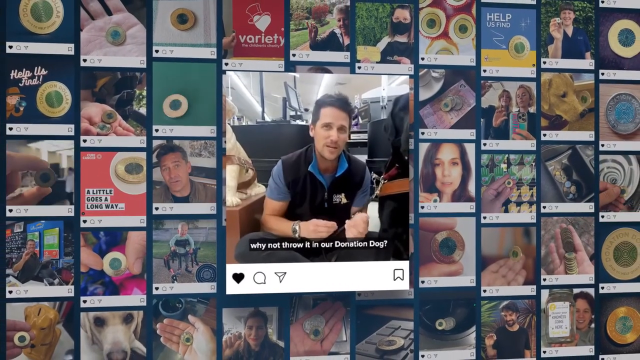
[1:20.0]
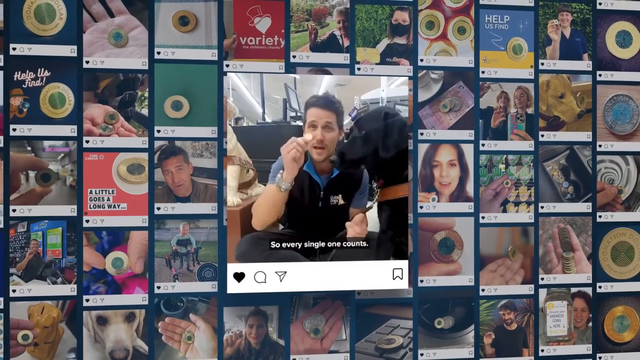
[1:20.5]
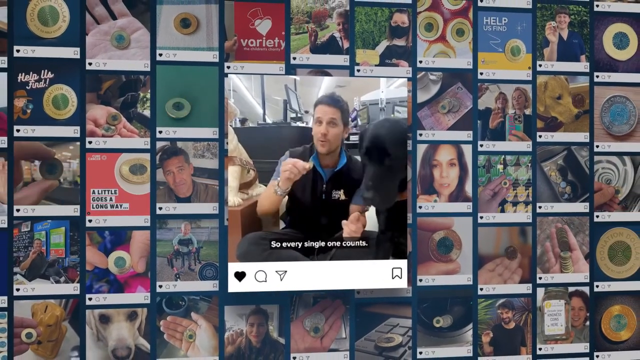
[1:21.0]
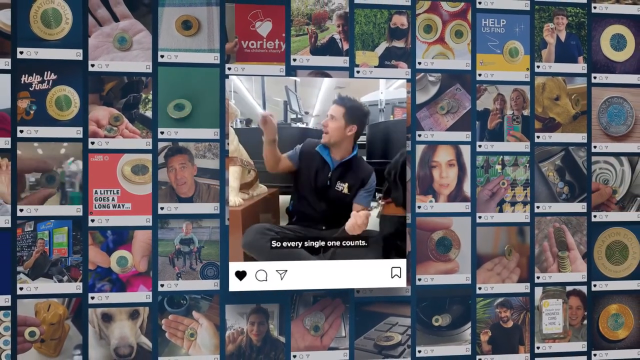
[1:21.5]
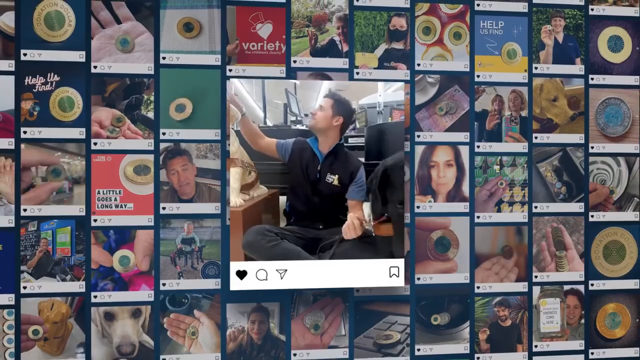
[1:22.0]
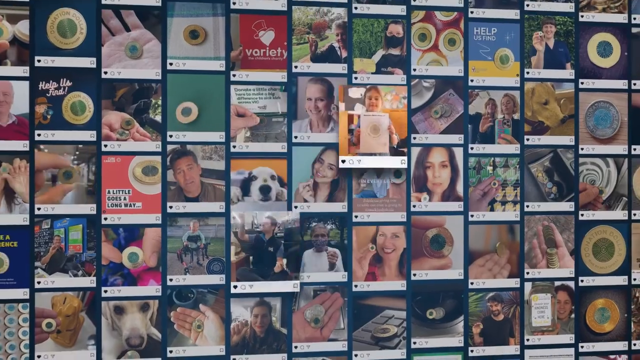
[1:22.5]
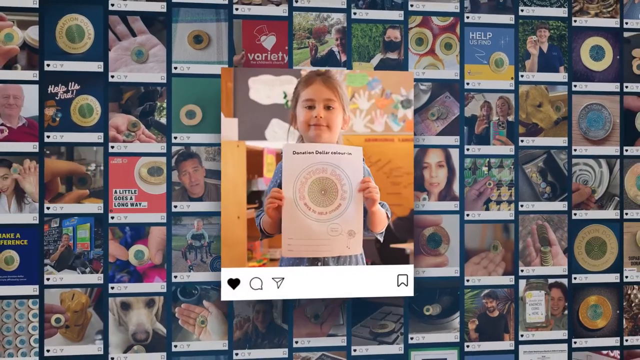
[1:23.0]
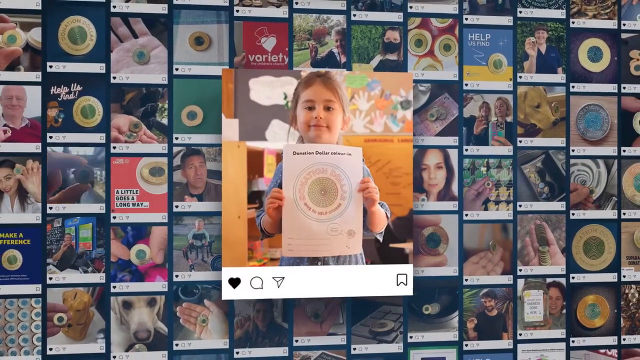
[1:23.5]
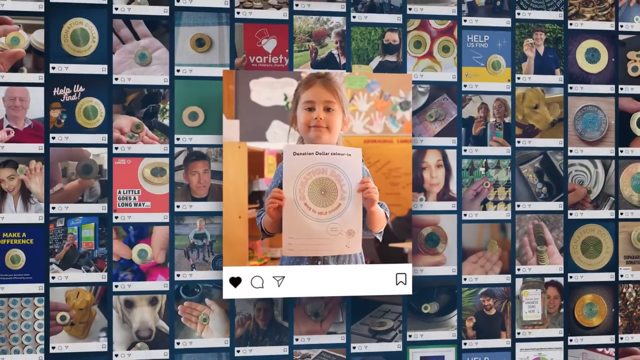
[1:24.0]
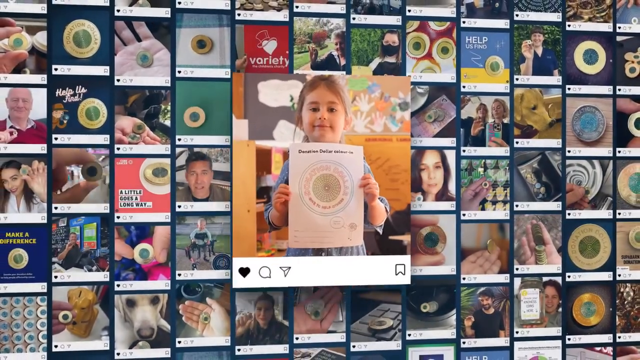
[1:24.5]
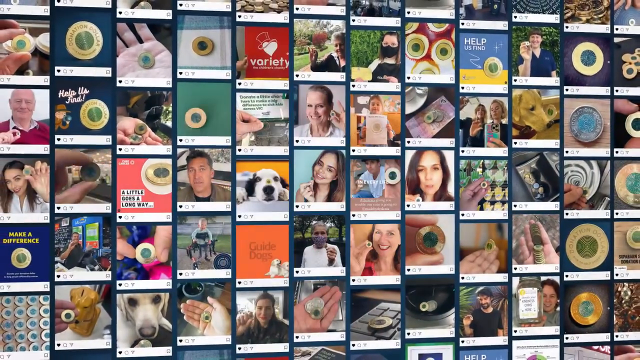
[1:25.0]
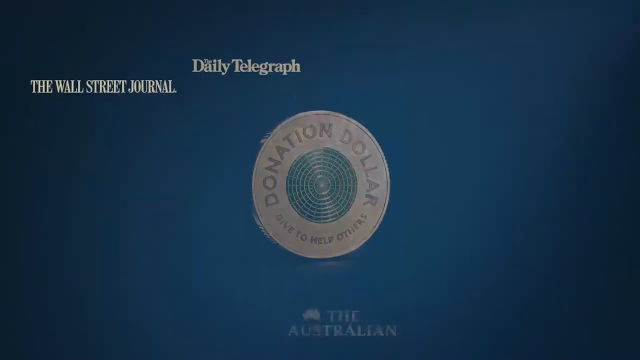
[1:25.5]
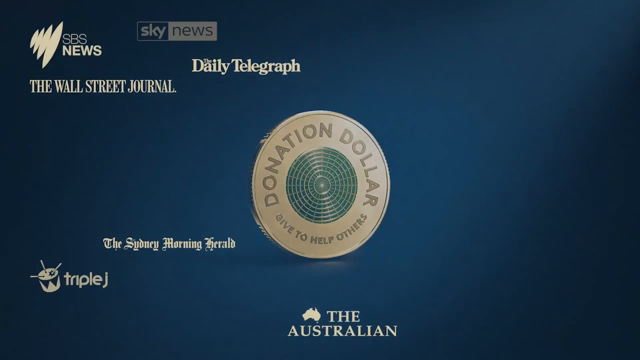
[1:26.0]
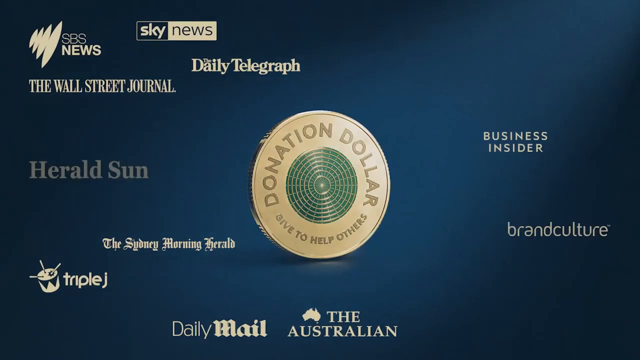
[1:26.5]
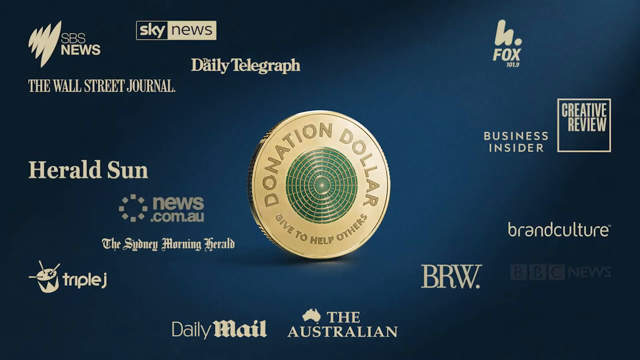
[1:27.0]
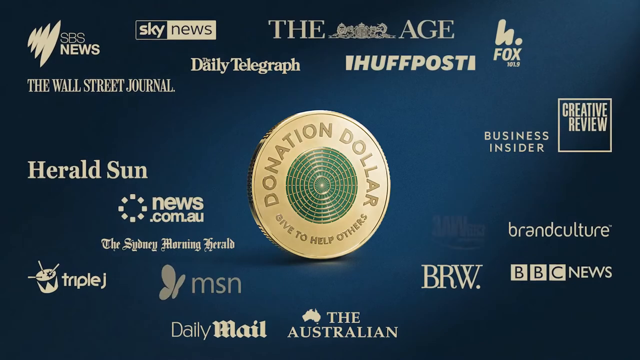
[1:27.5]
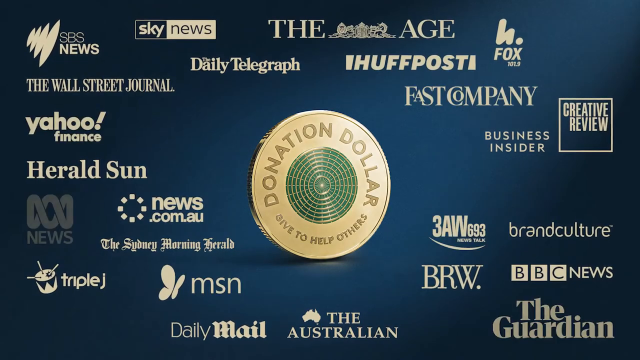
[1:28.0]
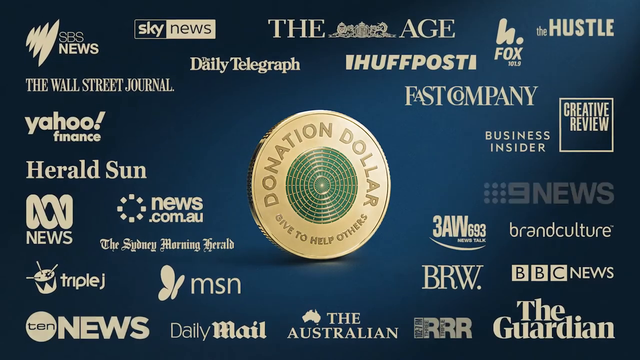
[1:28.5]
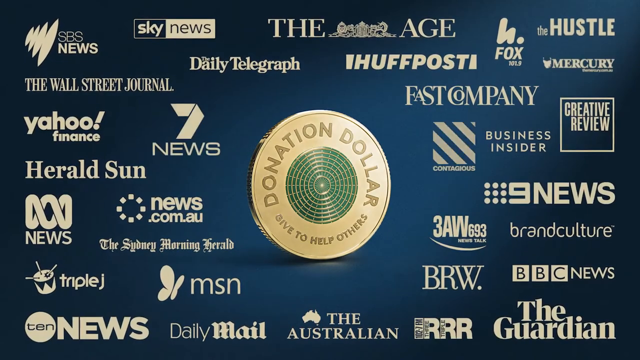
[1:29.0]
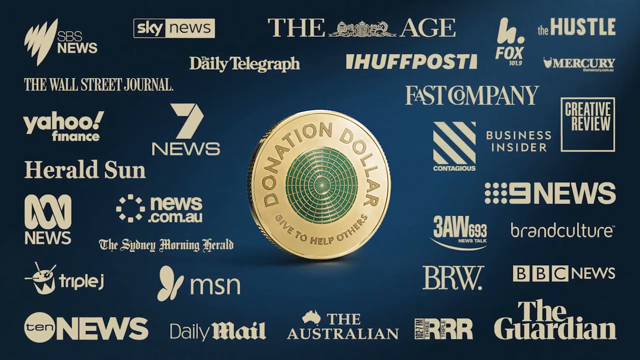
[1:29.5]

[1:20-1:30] Many images move together. A zoomed-in picture shows what looks like a little girl holding up paper that says "donation dollar color in," with a donation dollar outline that is not filled in except for "Donation," and the middle is yellow. Then a blue screen appears with probably a lot of newspaper names appearing in yellow, the donation dollar in the middle, and the different newspapers showing up all around the coin.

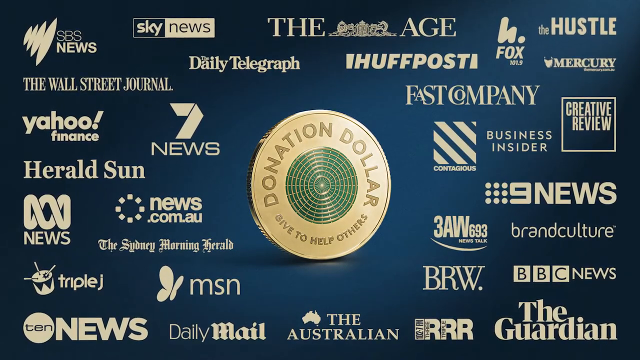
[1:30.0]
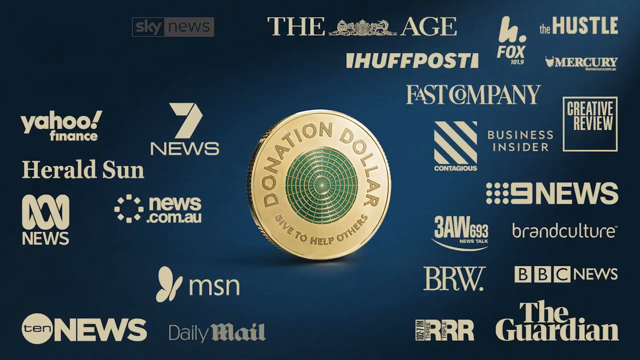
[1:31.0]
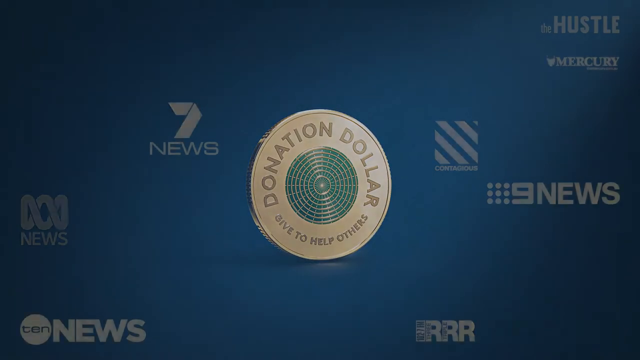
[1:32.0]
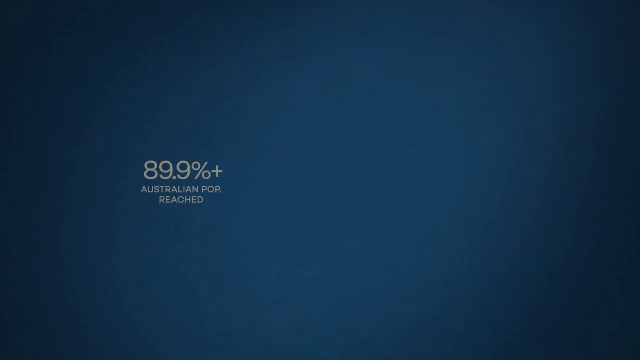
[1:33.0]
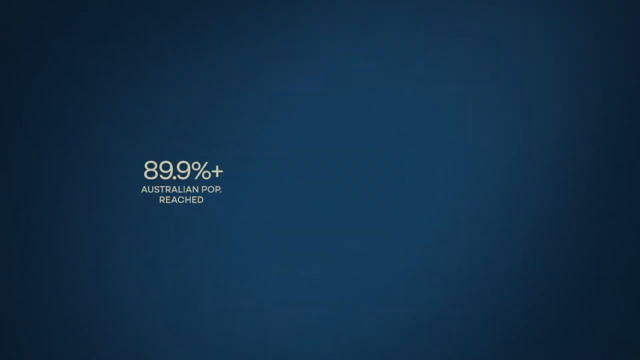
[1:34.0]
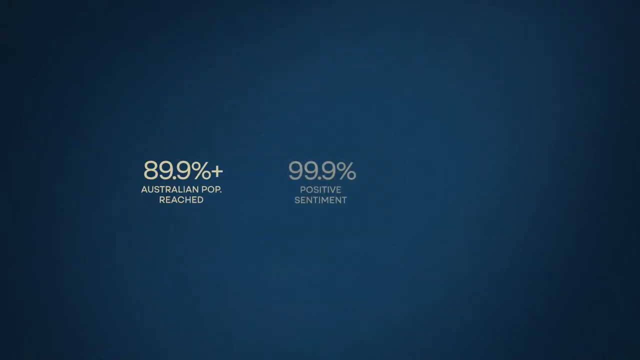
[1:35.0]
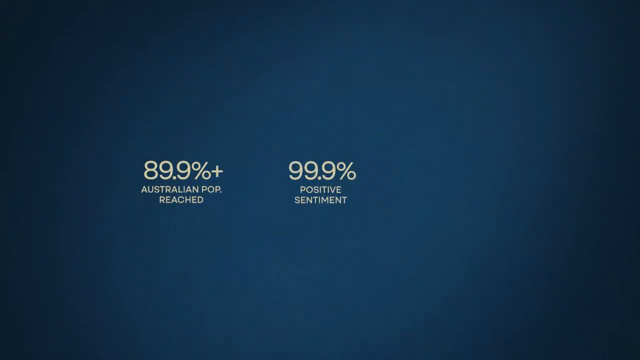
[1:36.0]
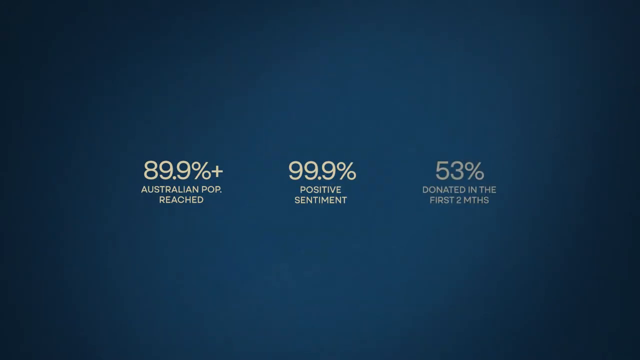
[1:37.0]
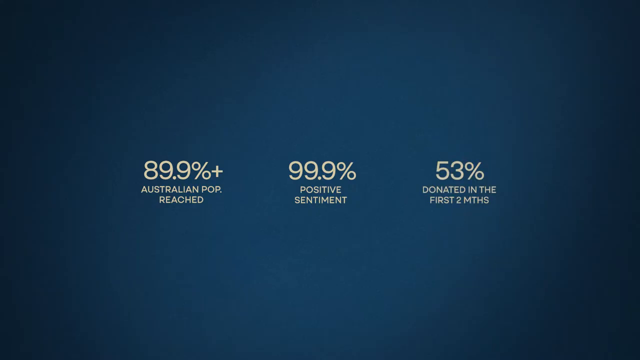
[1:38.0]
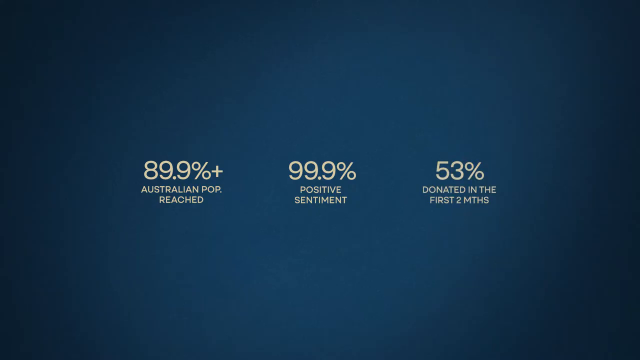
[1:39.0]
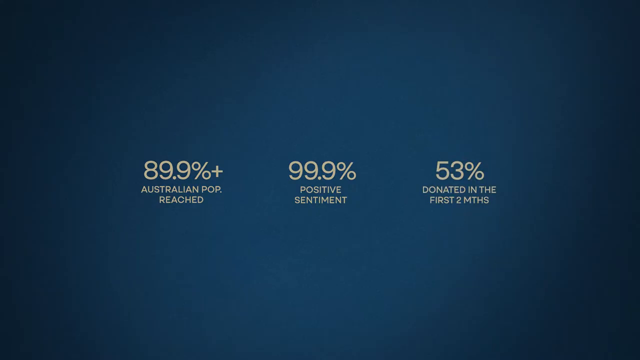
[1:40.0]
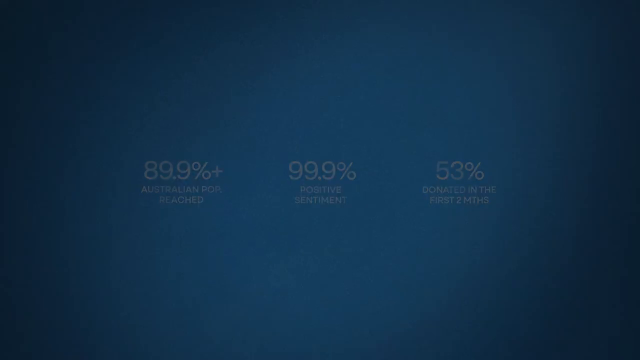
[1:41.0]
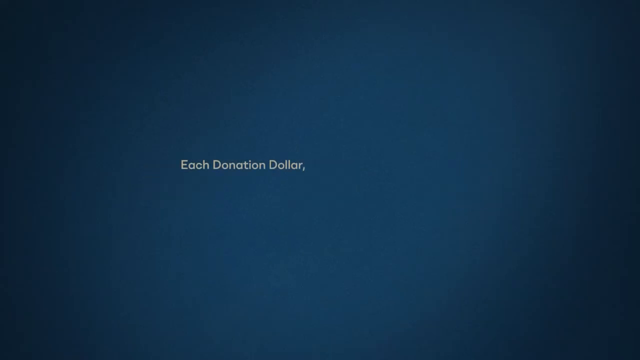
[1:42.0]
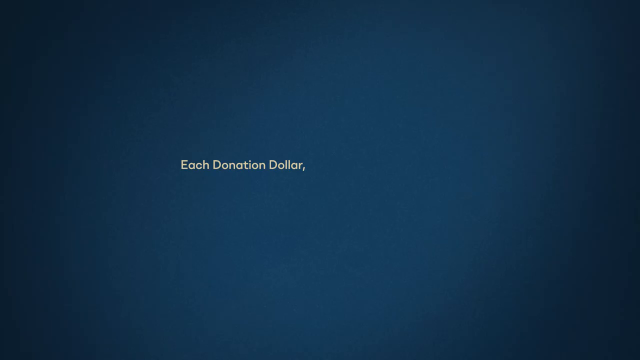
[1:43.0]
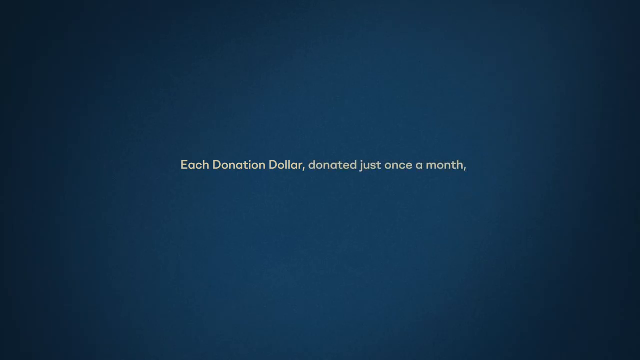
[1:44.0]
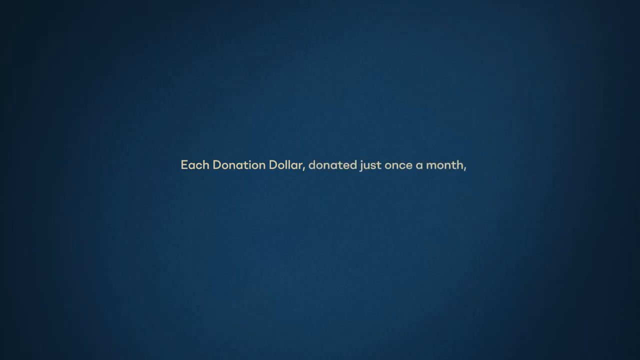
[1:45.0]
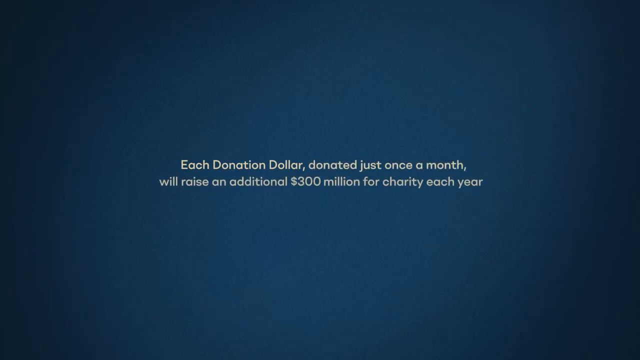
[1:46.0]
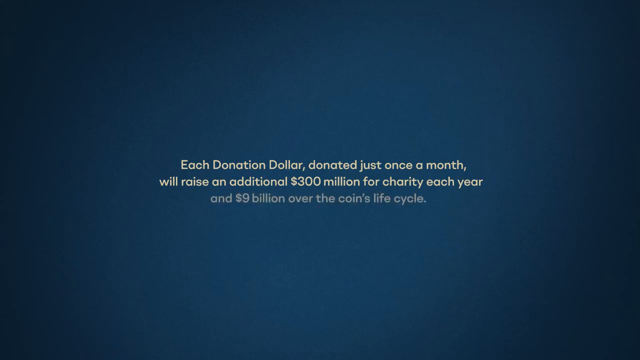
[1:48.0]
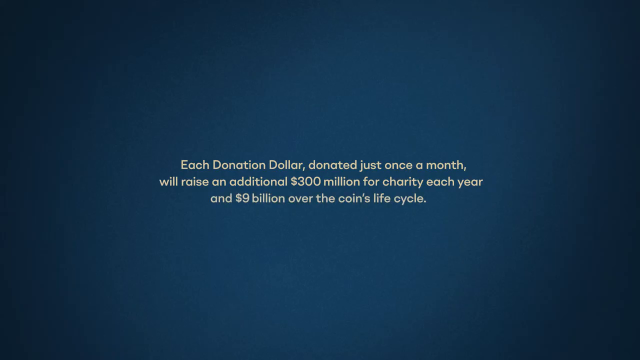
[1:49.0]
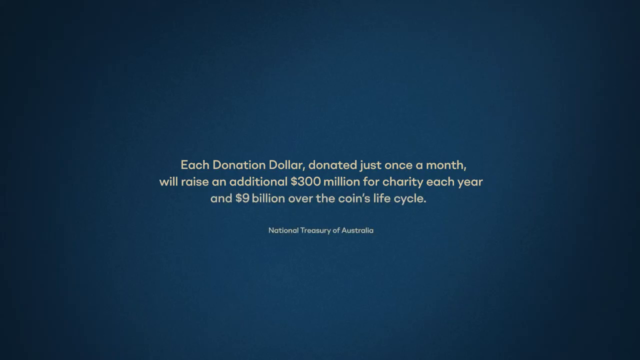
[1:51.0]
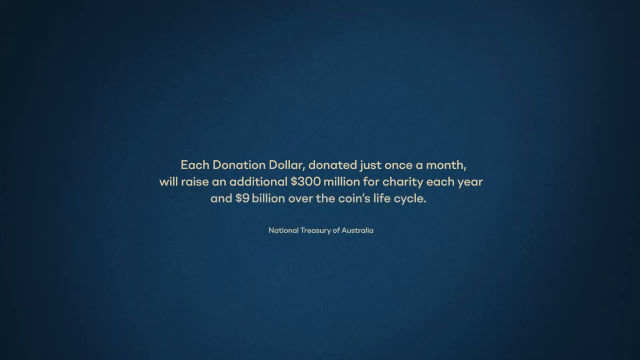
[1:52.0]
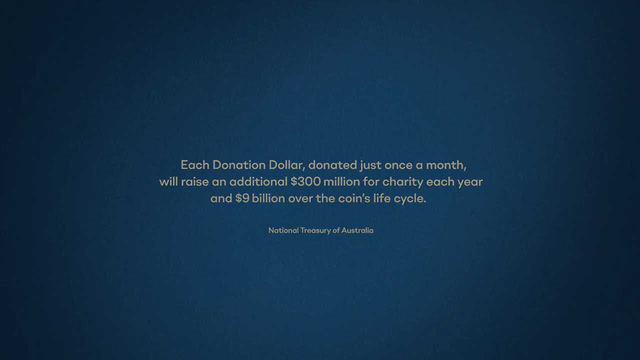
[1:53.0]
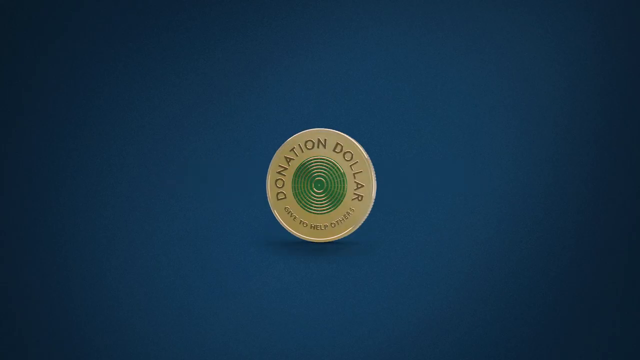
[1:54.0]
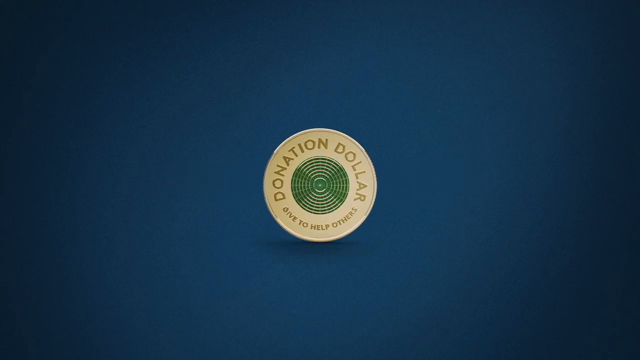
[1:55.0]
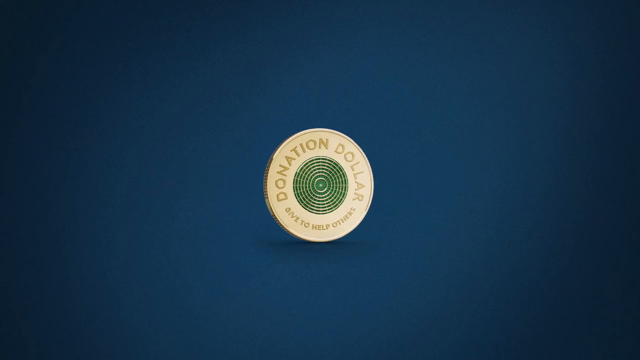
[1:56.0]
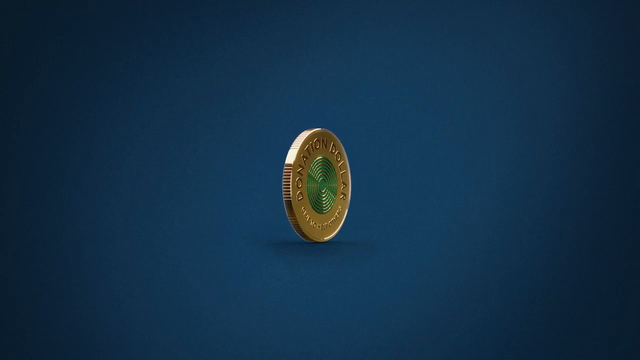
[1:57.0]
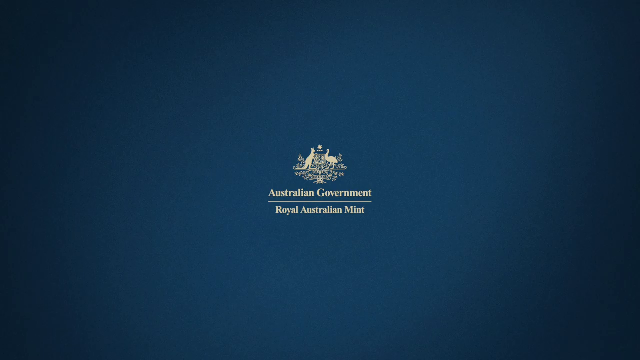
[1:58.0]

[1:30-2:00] The coin shows "donation dollar" in the golden part in the circle, with what looks like some kind of metal rim, and then "give to help others" as it kind of circles. Text says "89.9 percent plus" with "Australian pop reach" below, then "99.9 percent positive sentiment," then "53 percent donated in the first two months." It fades away, and text reads "each donation dollar donated just once a month" and "will raise an additional 300 million for charity each year," then nine billion over the coin's life cycle. Below that, in smaller print on yellow, it says "national treasury of Australia," and then it fades away. The coin then kind of spins.